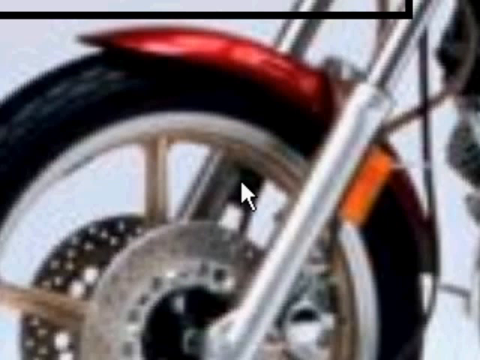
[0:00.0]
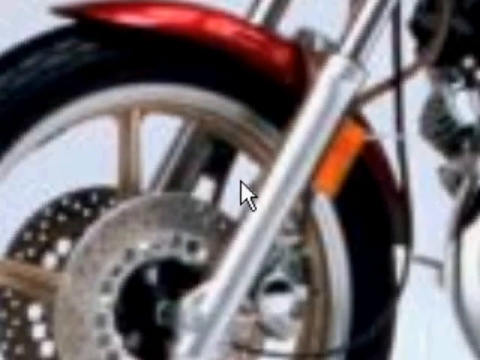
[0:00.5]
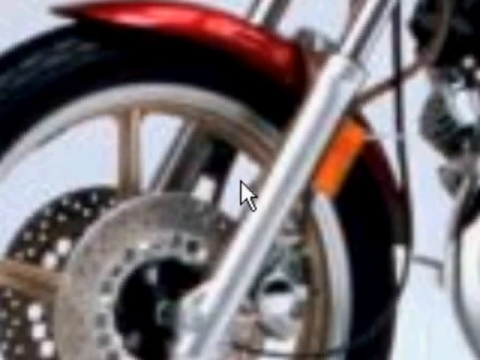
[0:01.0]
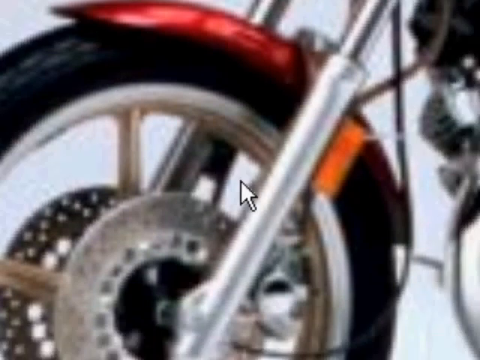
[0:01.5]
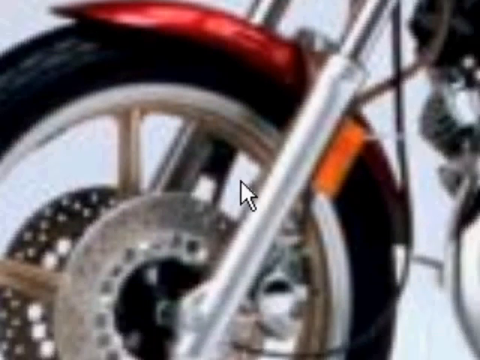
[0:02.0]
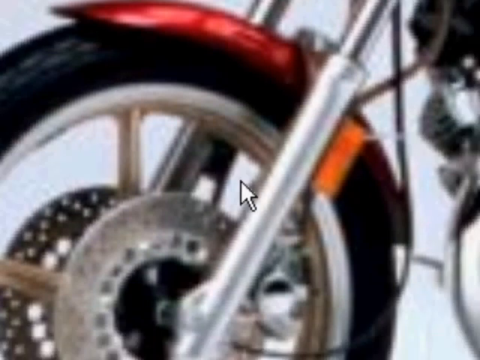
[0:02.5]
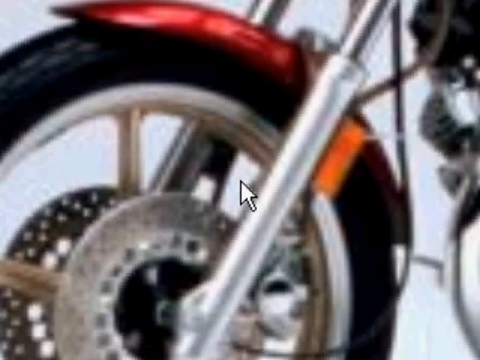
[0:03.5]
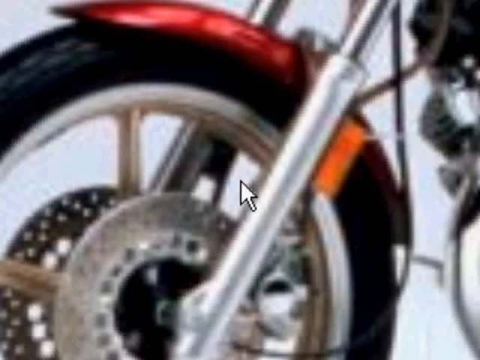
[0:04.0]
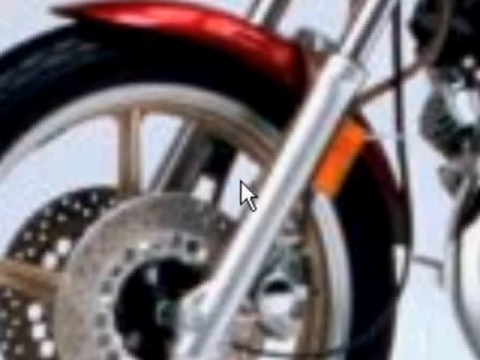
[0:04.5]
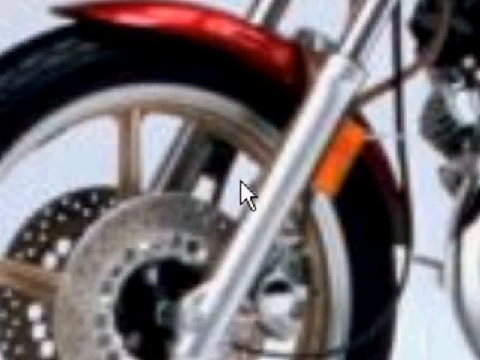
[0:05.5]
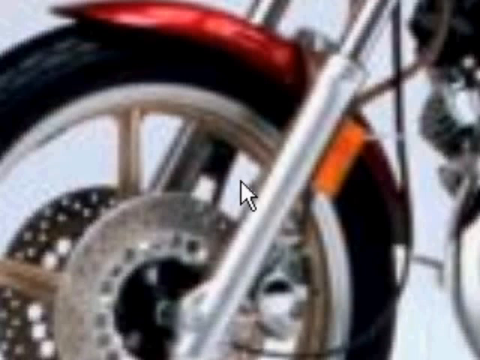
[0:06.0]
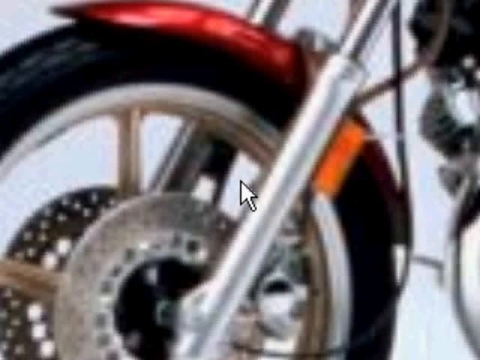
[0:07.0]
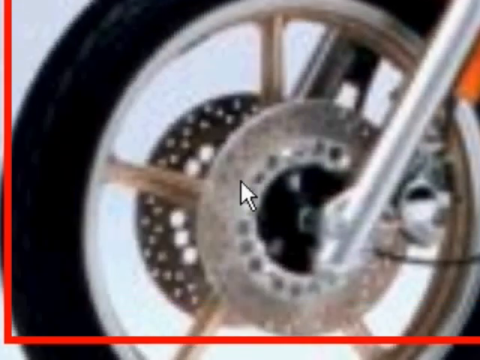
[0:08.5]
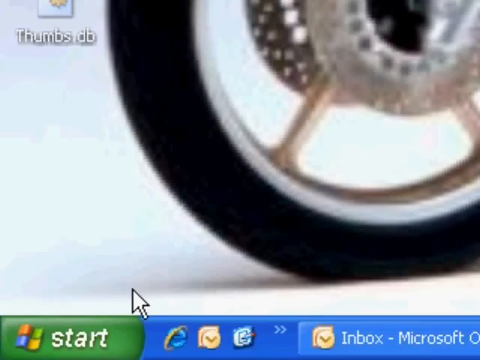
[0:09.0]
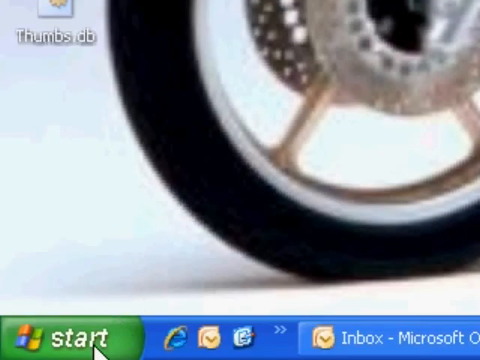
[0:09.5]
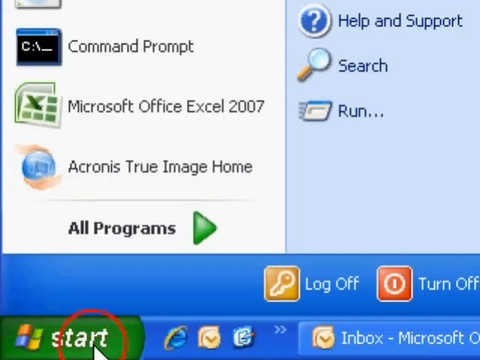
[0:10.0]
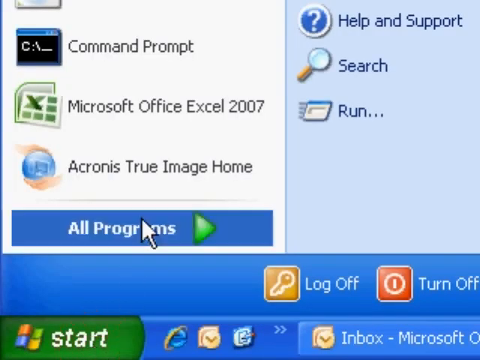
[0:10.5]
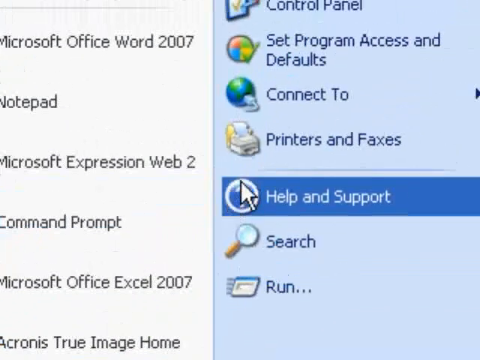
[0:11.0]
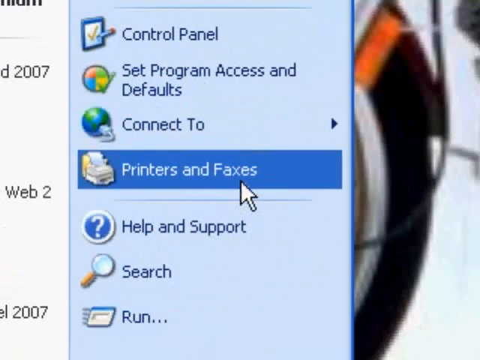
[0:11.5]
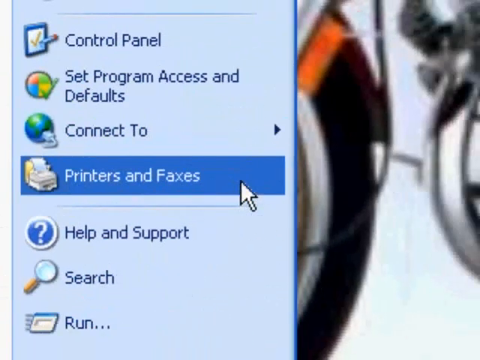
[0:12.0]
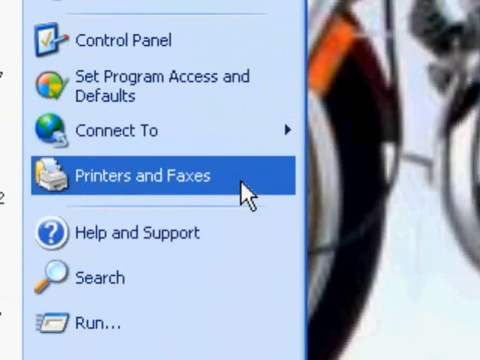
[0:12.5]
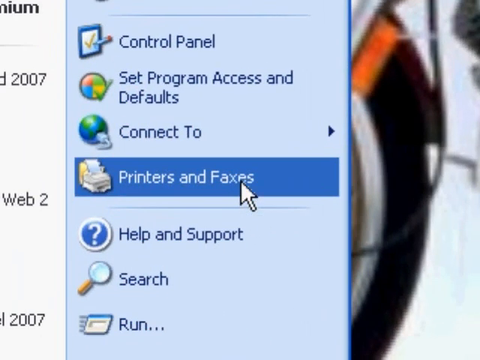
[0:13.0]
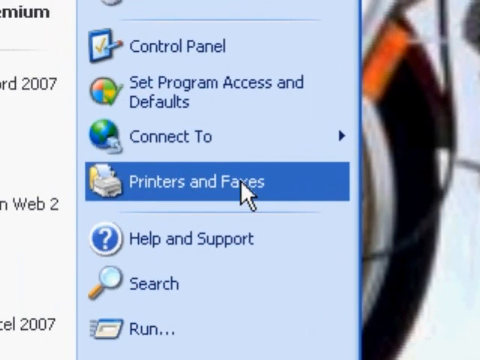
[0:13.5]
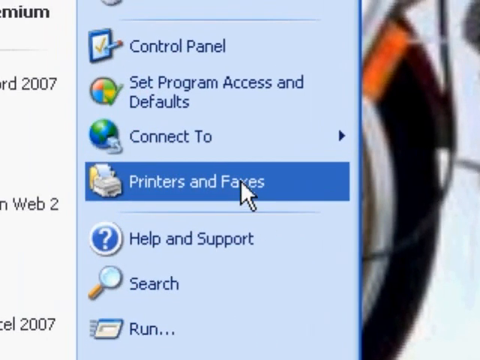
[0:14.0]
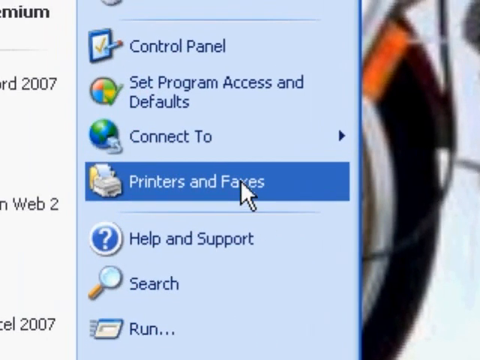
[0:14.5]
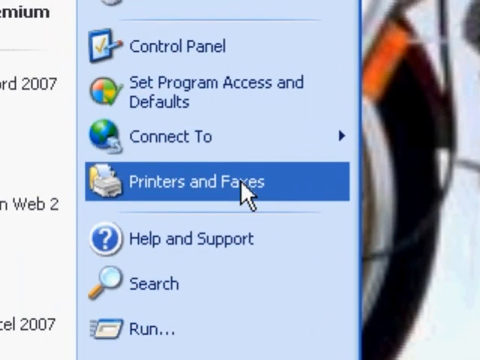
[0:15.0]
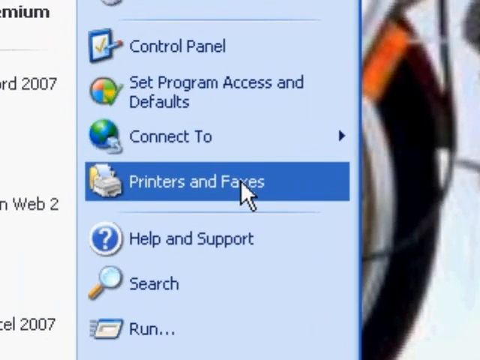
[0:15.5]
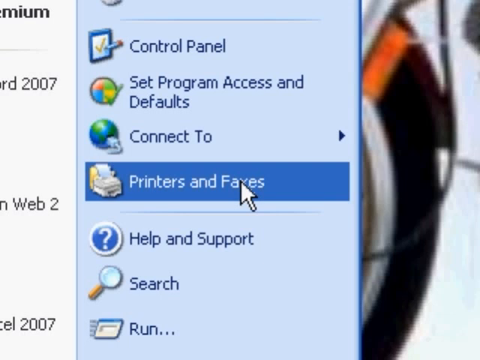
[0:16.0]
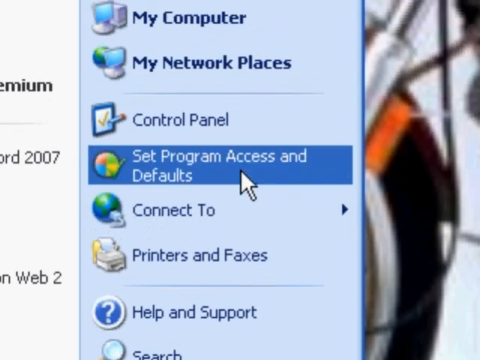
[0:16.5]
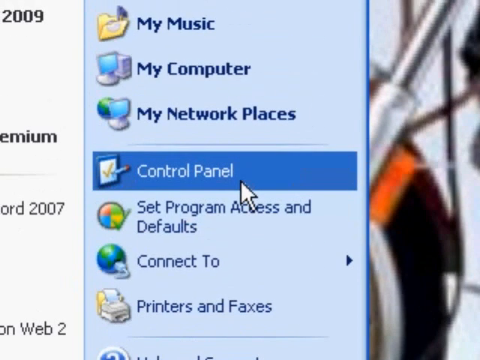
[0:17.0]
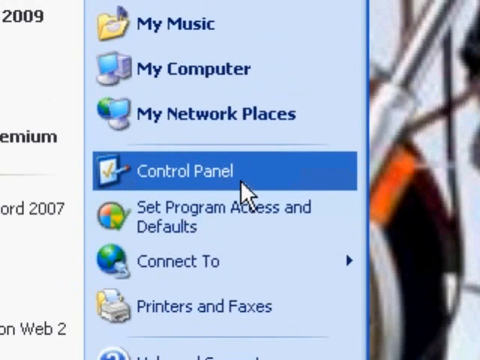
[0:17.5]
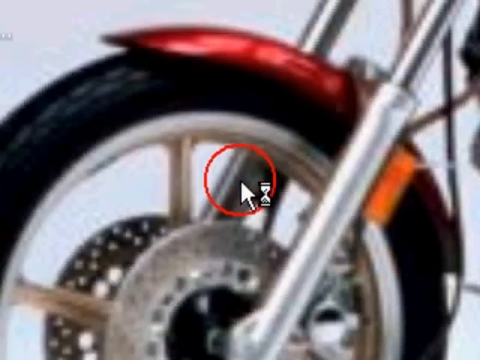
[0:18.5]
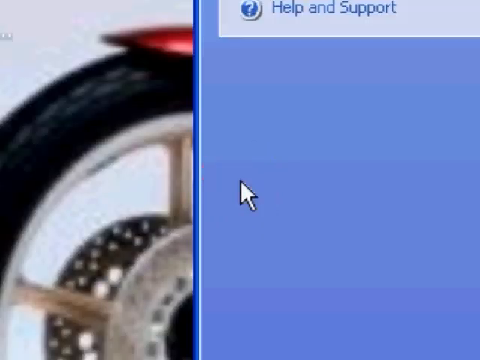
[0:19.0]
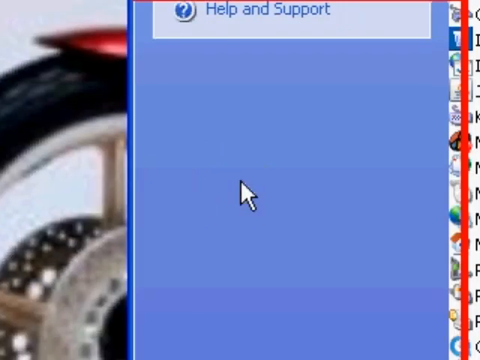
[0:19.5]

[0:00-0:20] The video opens on a grainy image of the front tire of a motorcycle, which appears to be the screen saver. The wheel, the fork and its fender are visible, along with a portion of the engine. A cursor in the middle of the image sort of drags the image, and the view ends up on the Windows start page. The cursor searches and highlights printers and faxes, then scrolls up to control panel and clicks. The cursor sort of drags and drops the windows manager so that it covers most of the screen, and a drop-down menu for control panel and windows opens, listing programs that are on the computer hard drive.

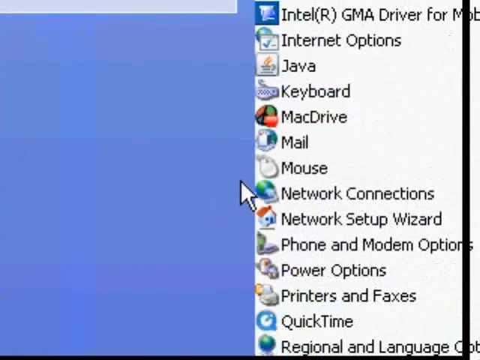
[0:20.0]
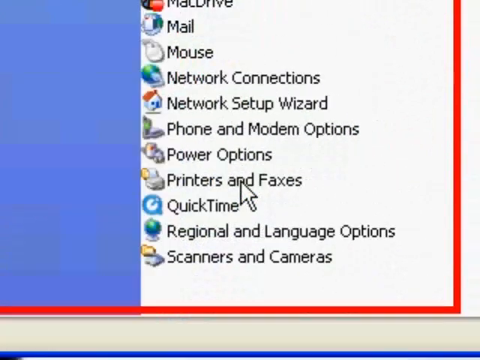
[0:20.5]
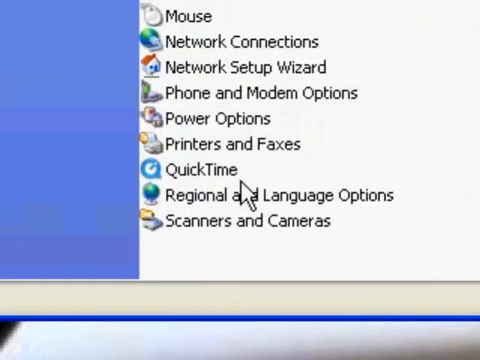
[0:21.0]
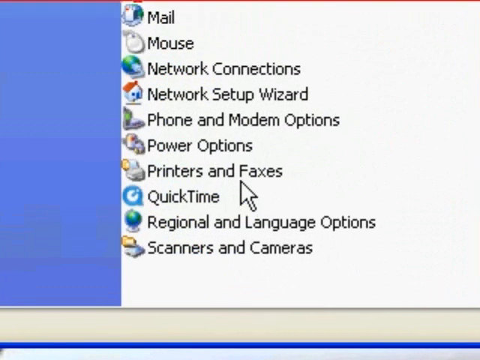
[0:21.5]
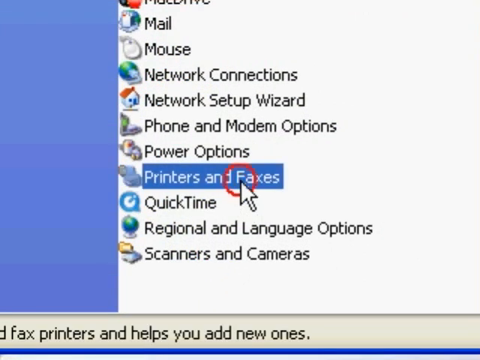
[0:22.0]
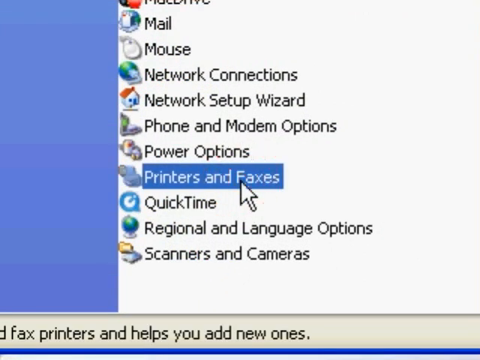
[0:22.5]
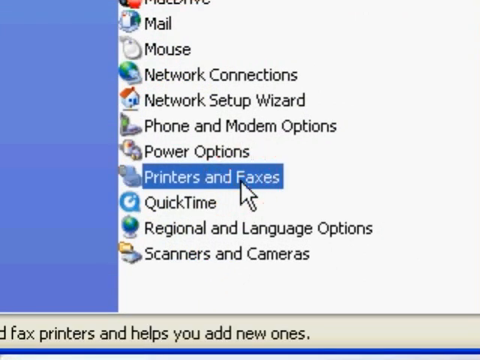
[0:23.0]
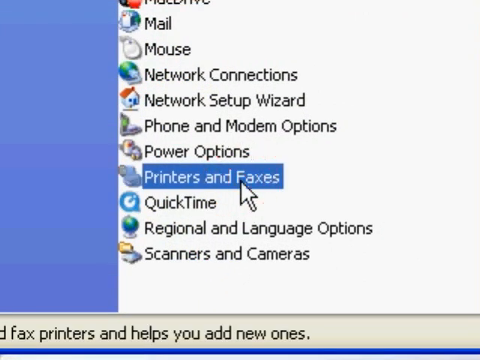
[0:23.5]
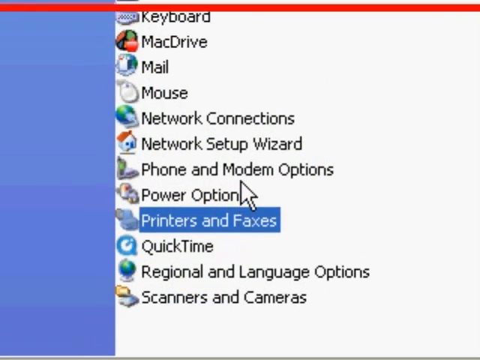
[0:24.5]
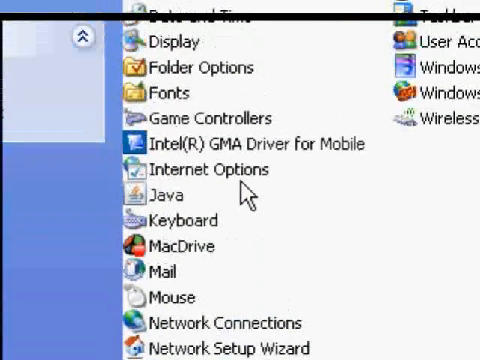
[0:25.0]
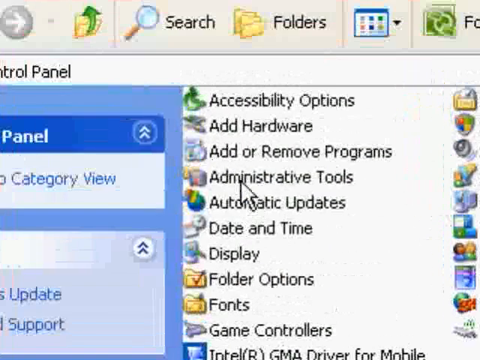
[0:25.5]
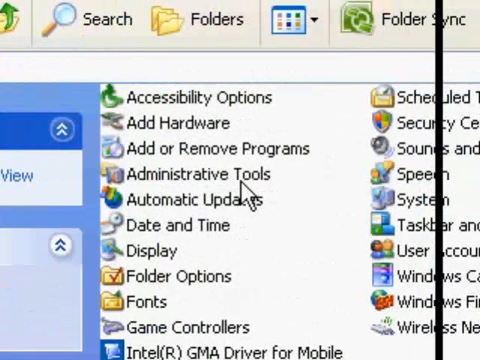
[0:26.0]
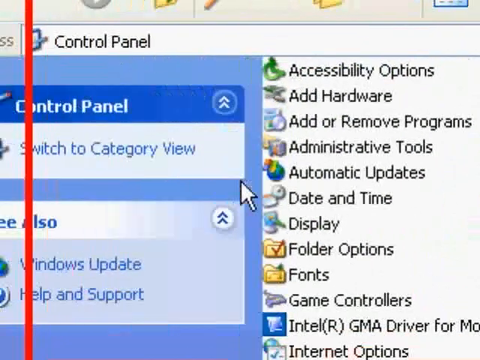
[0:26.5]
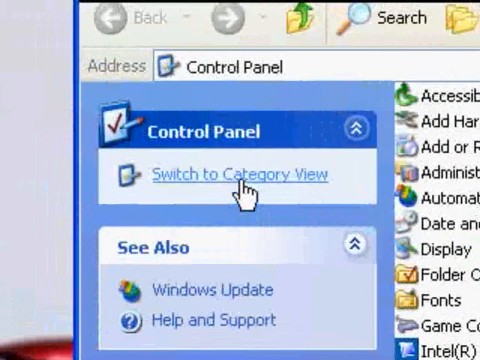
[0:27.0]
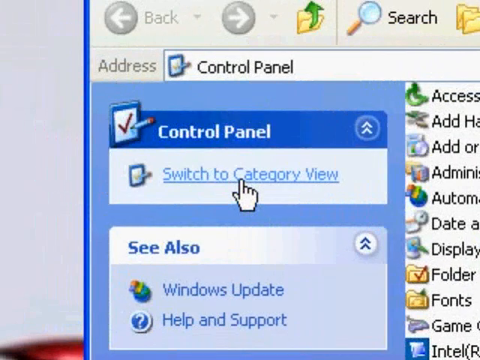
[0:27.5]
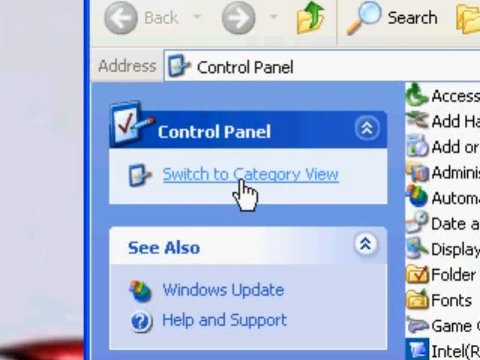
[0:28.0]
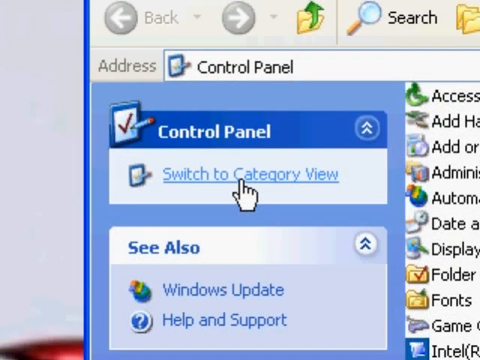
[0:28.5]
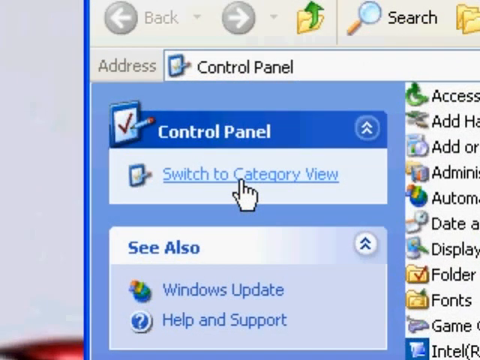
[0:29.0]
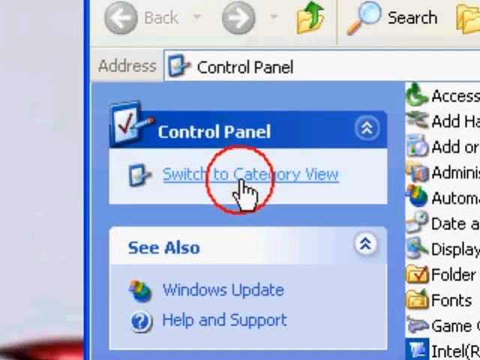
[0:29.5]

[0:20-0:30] A computer monitor shows a cursor in what appears to be the control panel. Multiple options are listed, such as mail, mouse, network connections, network setup wizard, phone and modem options, power options, printer and faxes, quick time, regional and language options, and scanners and cameras, and the cursor is on printers and faxes. The cursor scrolls the page up to the top, where a border holds search, folders, folder sync and a drop-down box for even more. The cursor then moves over to the side panel, where right beneath control panel is "switched to category view", and clicks it.